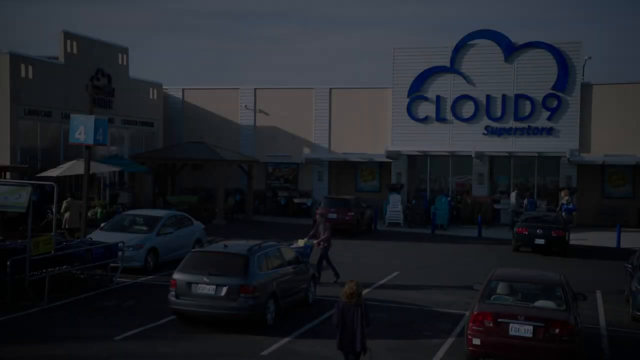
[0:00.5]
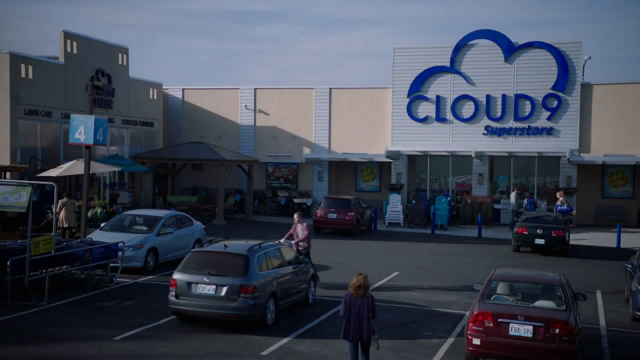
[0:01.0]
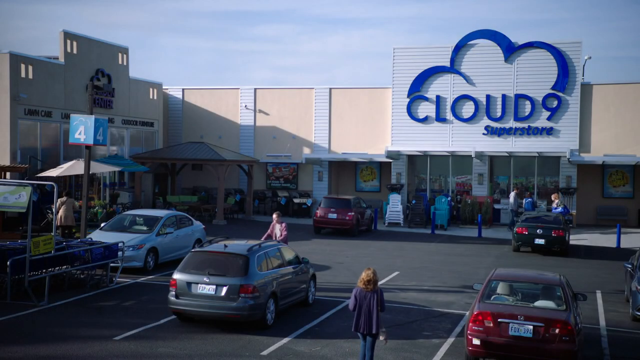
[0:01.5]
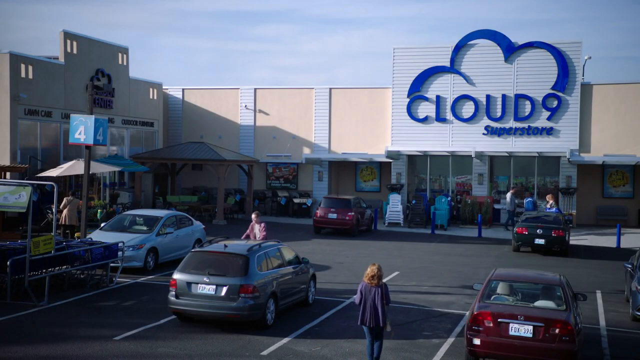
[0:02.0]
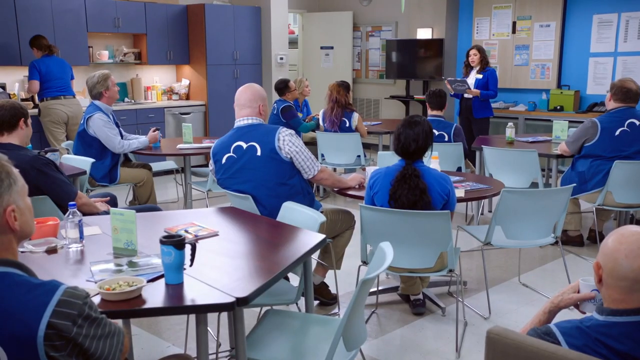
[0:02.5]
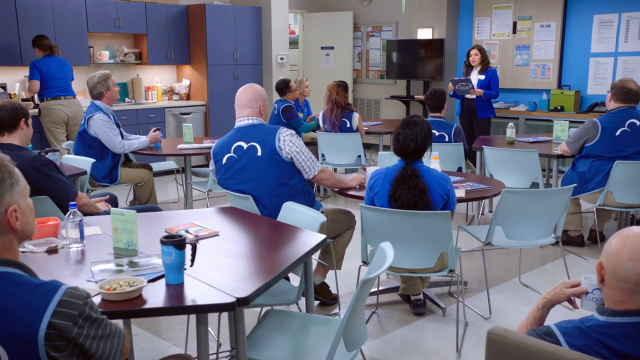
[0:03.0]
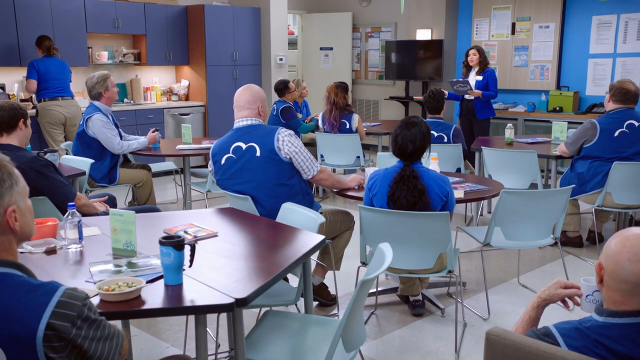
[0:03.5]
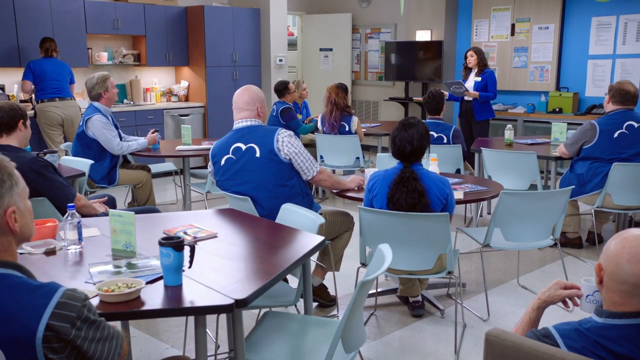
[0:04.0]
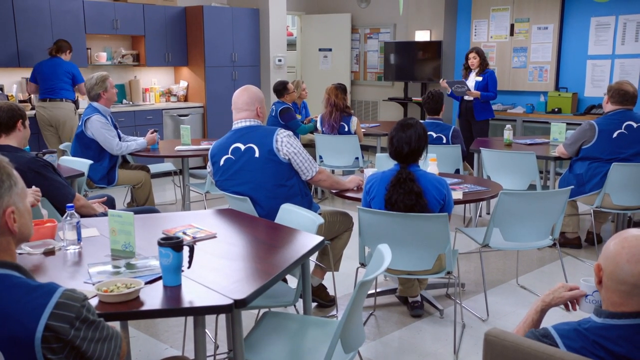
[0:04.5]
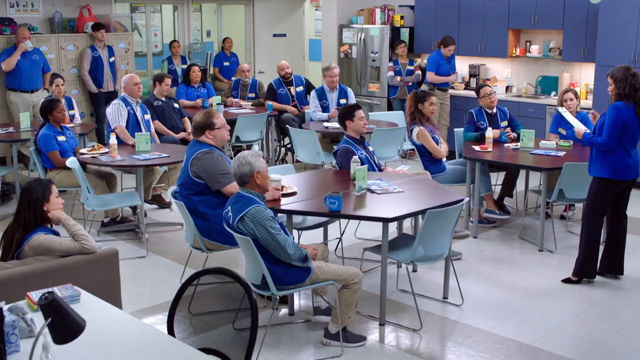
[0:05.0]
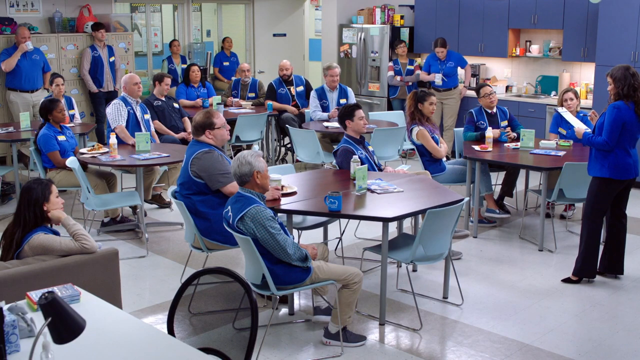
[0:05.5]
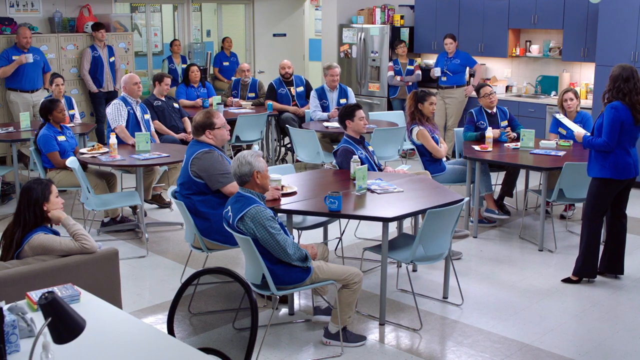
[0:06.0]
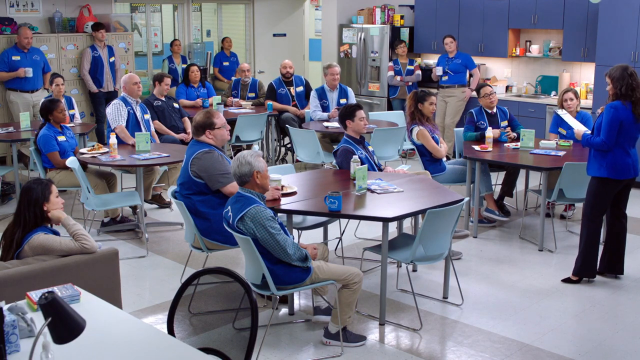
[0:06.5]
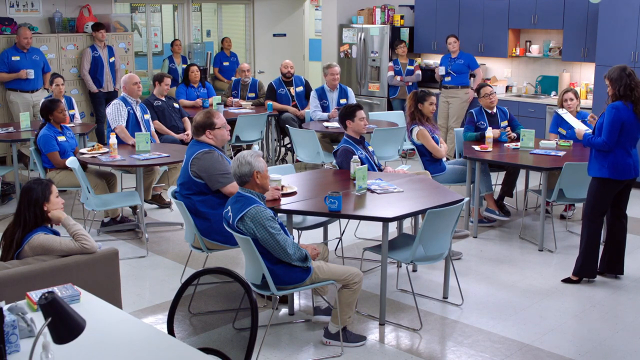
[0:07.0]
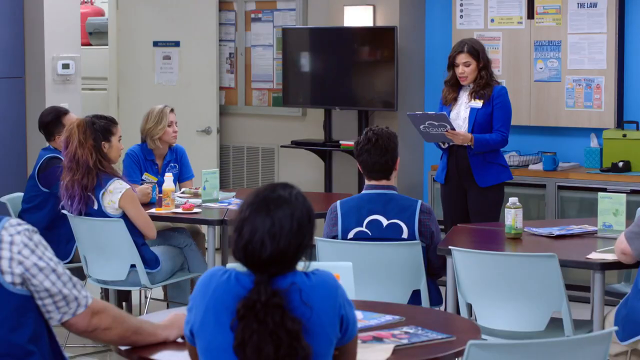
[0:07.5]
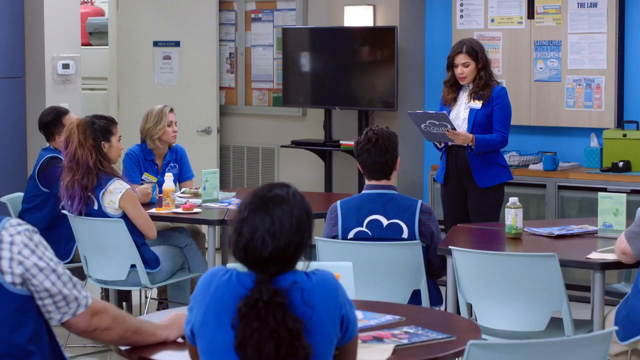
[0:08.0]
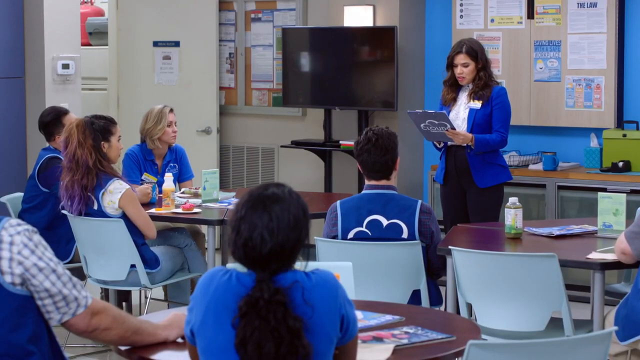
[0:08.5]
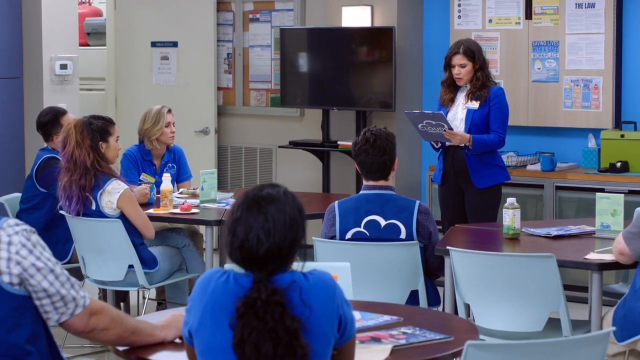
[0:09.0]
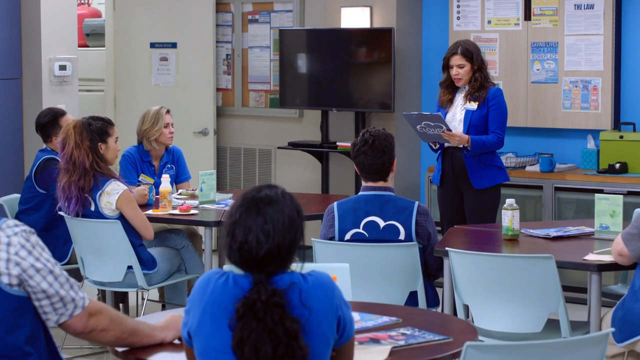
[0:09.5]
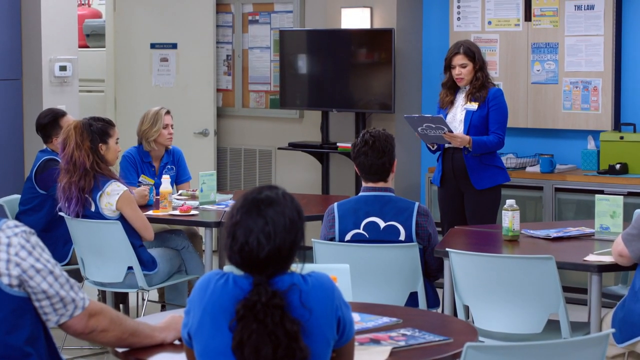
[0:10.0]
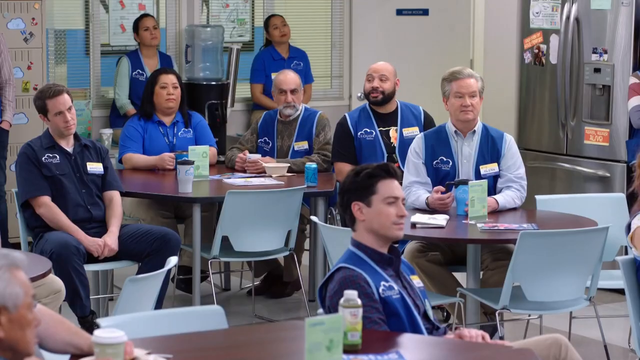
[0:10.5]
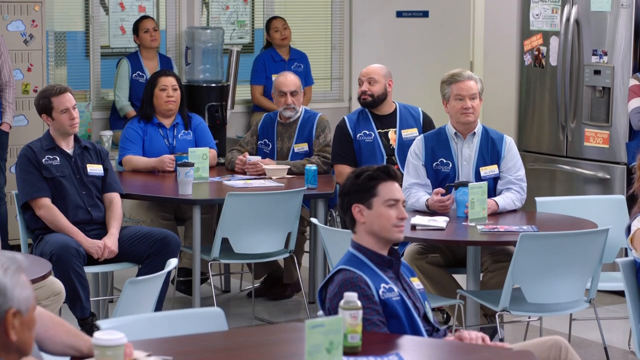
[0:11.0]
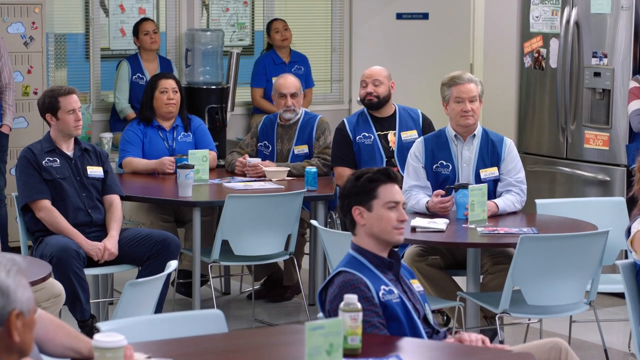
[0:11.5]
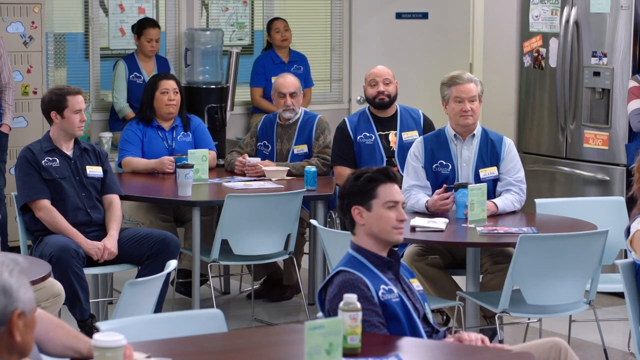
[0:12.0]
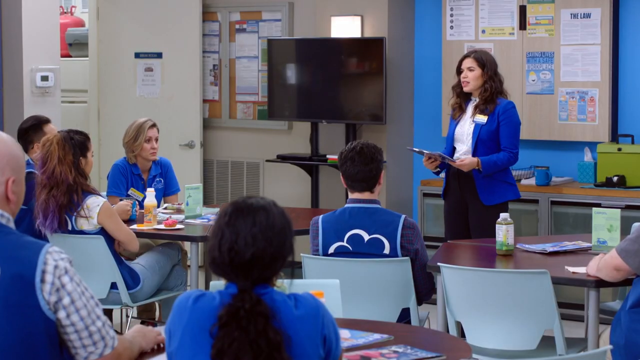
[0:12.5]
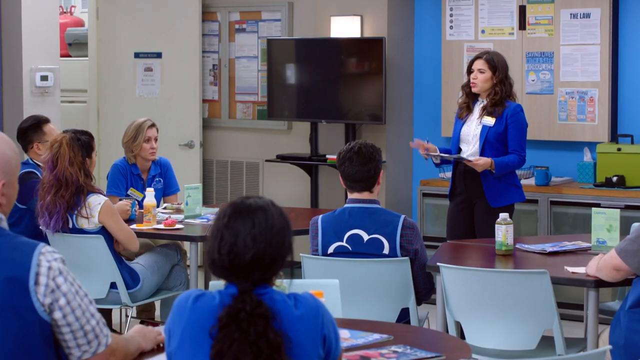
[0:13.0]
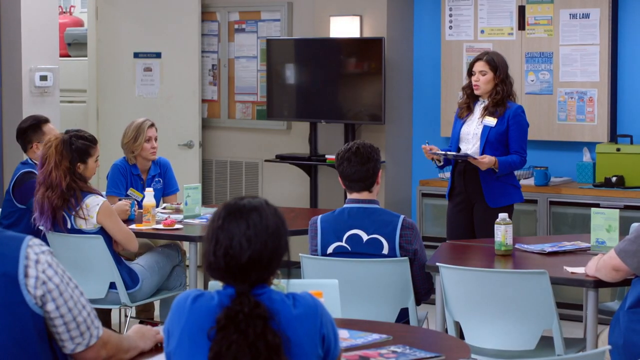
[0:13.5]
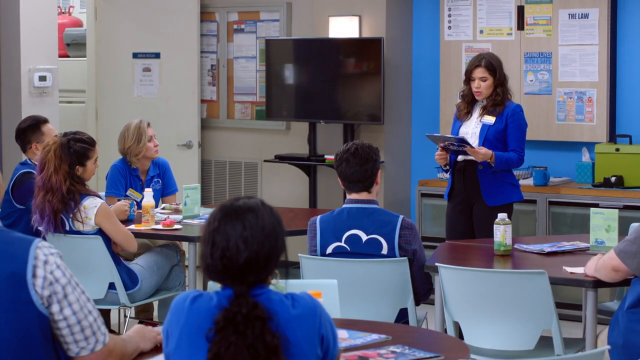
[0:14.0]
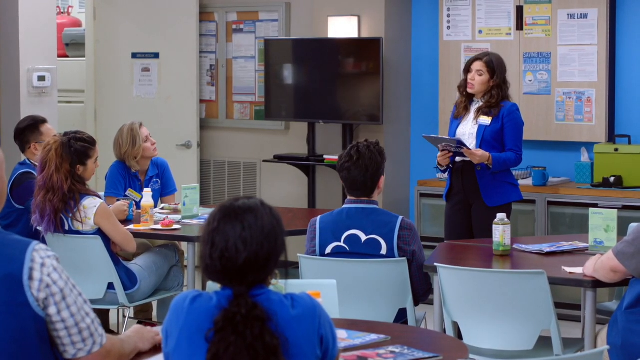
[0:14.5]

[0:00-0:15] The video opens on a storefront with a parking lot full of cars. A sign on the front of the store reads "cloud 9" in blue letters. The scene cuts to the interior of a room shaped like a classroom, where a woman in blue and black pants stands at the front reading off a clipboard to a group of people sitting in chairs, all wearing blue tops. As she talks, the camera pans across the seated people, who all look concerned or bored. To the left of the woman, a door stands open.